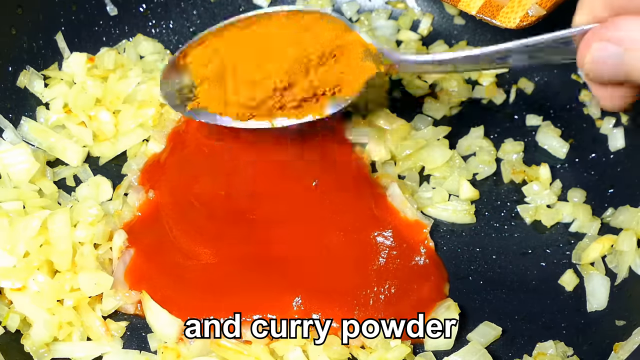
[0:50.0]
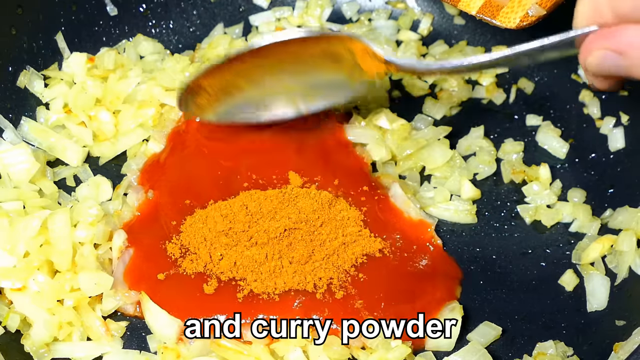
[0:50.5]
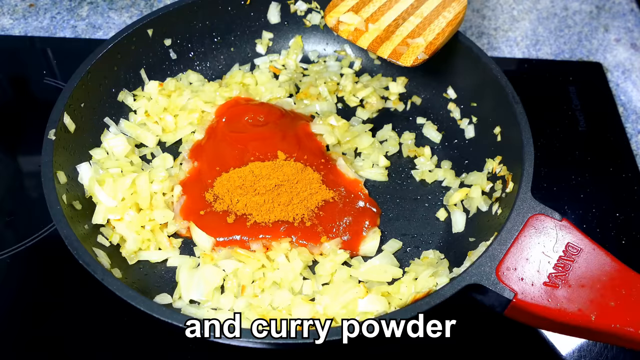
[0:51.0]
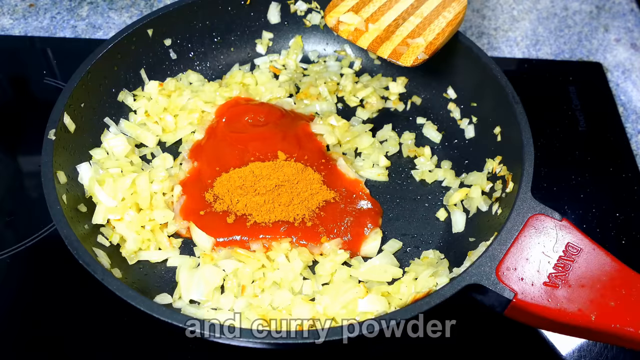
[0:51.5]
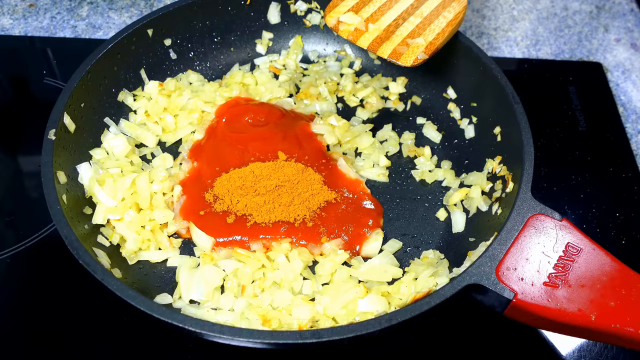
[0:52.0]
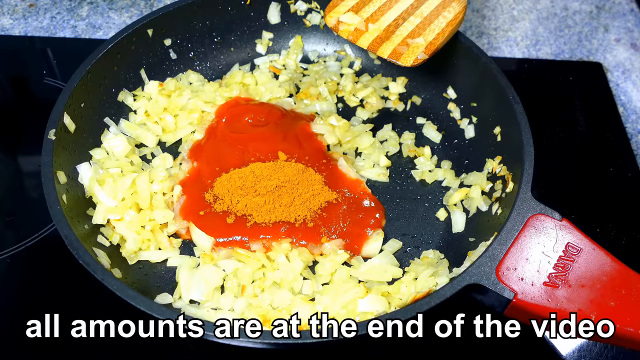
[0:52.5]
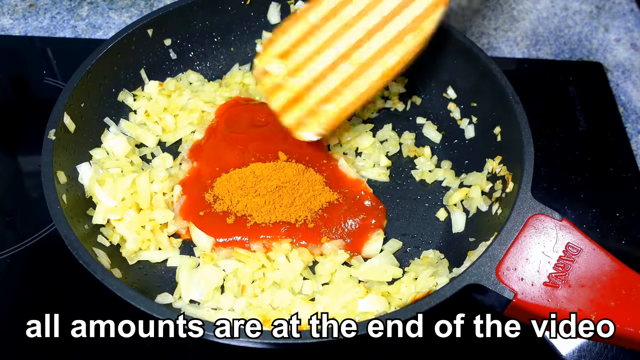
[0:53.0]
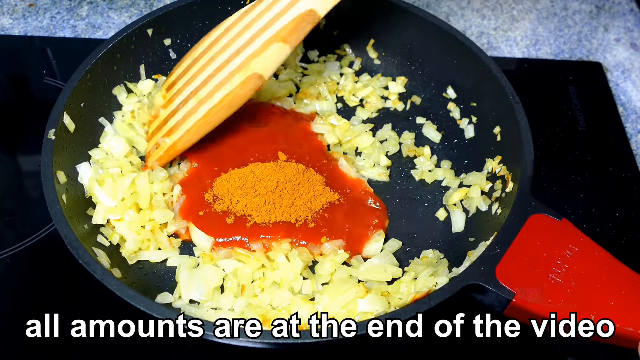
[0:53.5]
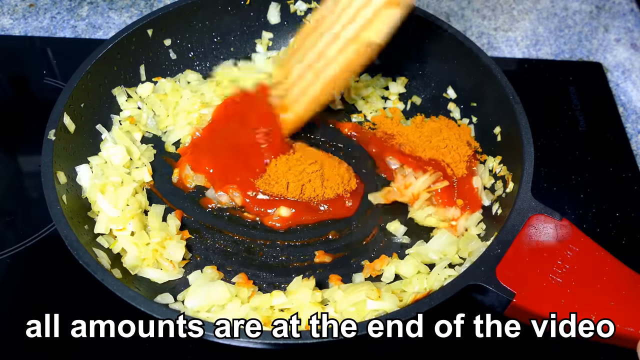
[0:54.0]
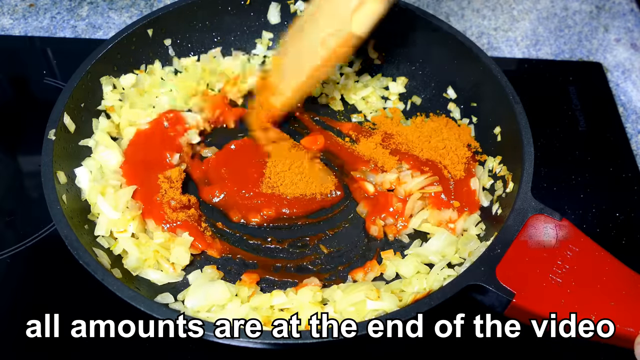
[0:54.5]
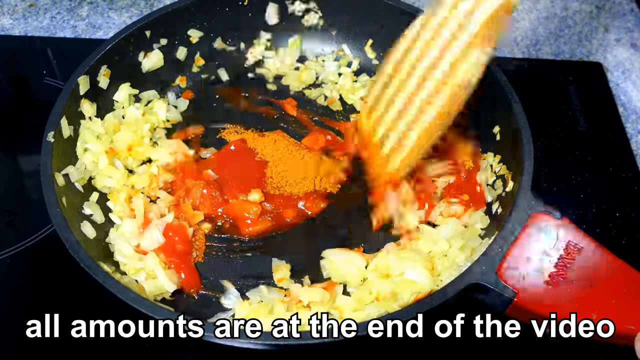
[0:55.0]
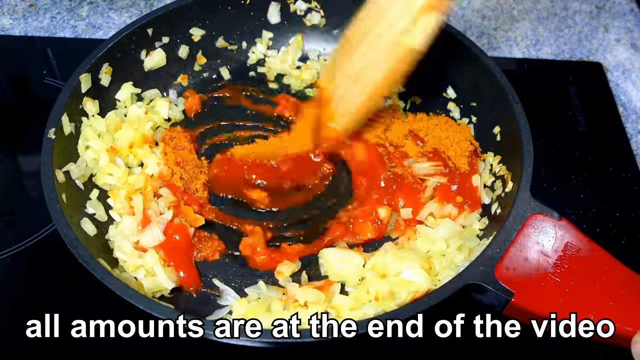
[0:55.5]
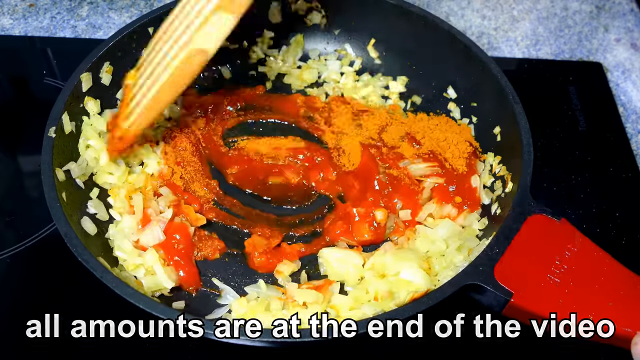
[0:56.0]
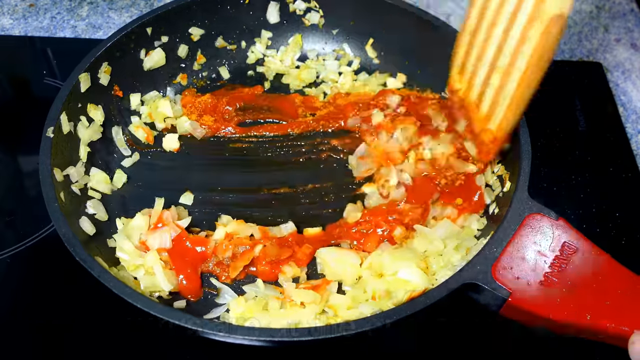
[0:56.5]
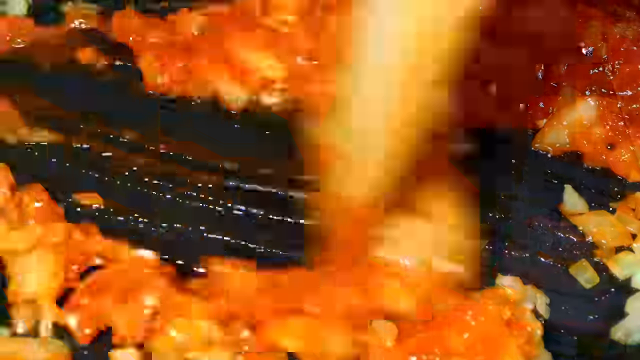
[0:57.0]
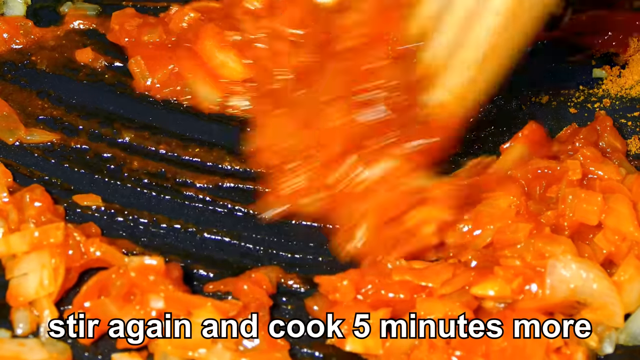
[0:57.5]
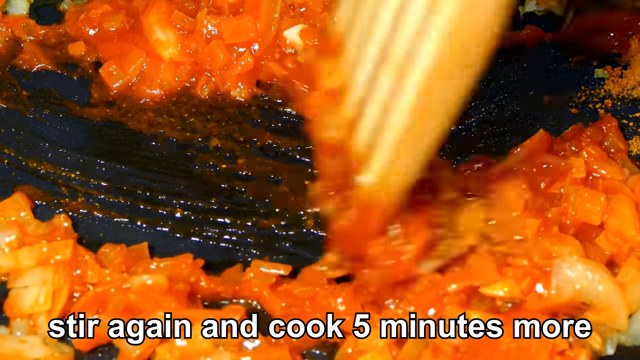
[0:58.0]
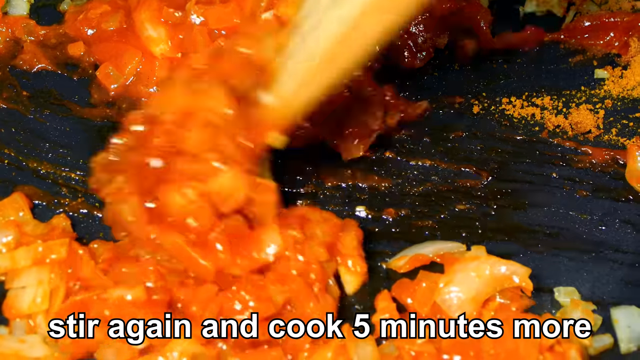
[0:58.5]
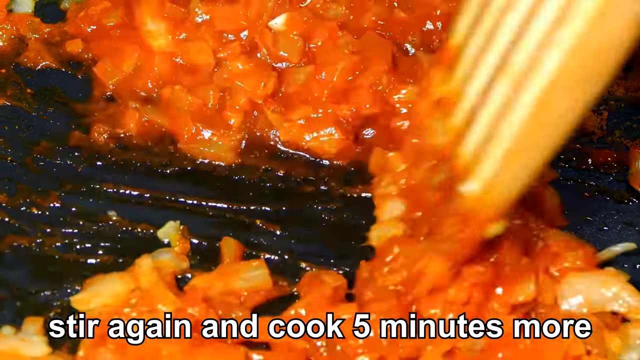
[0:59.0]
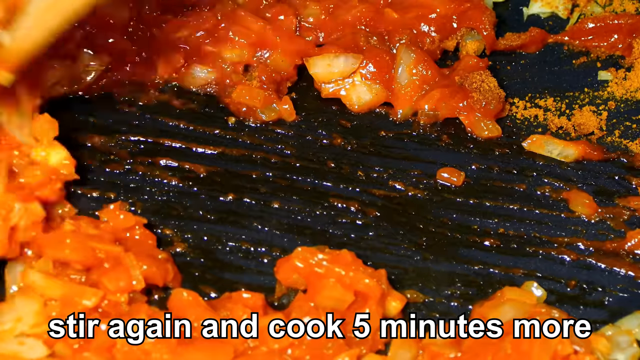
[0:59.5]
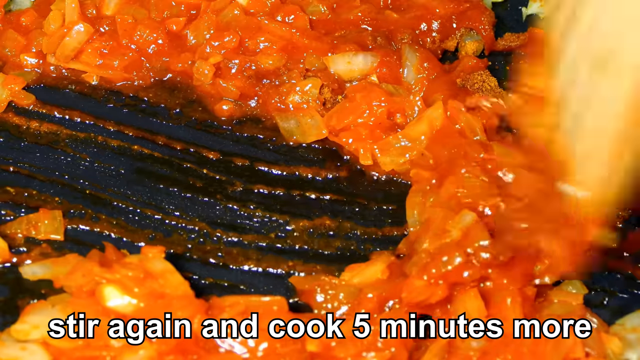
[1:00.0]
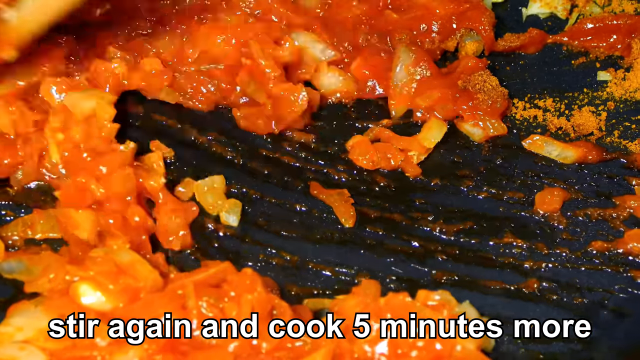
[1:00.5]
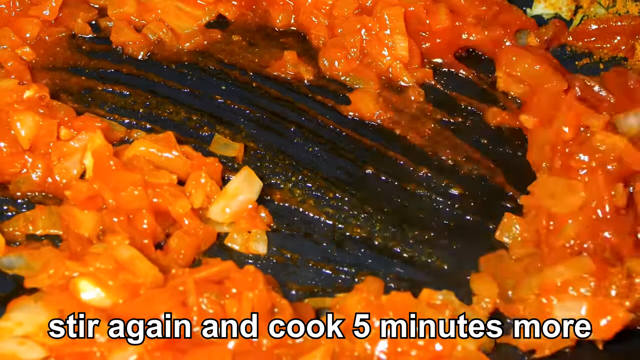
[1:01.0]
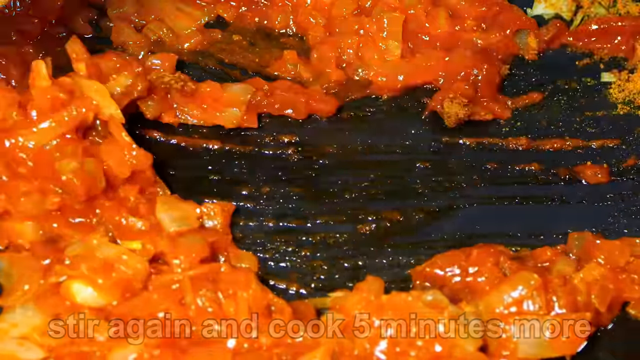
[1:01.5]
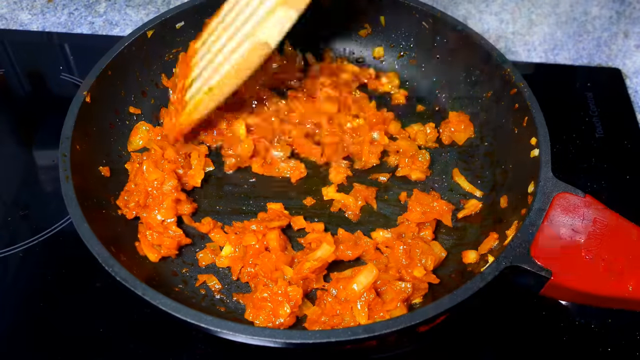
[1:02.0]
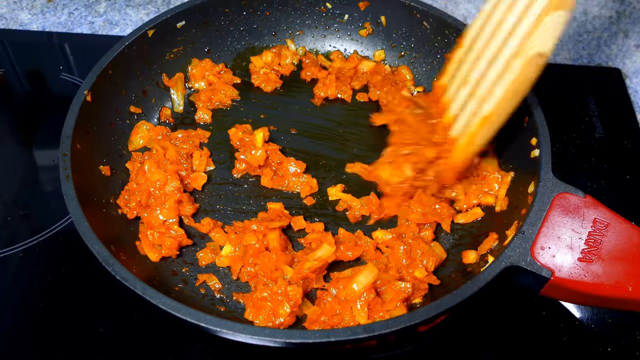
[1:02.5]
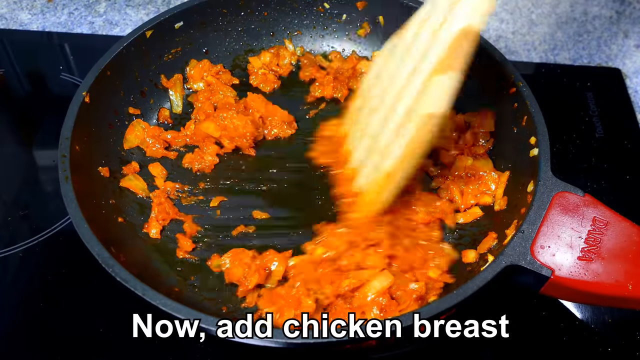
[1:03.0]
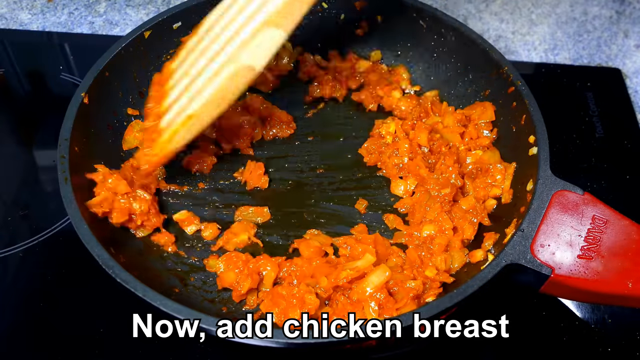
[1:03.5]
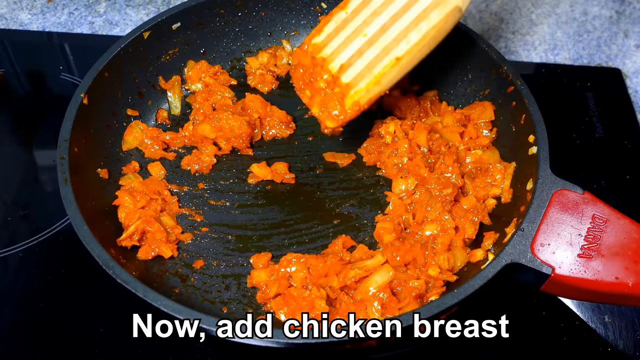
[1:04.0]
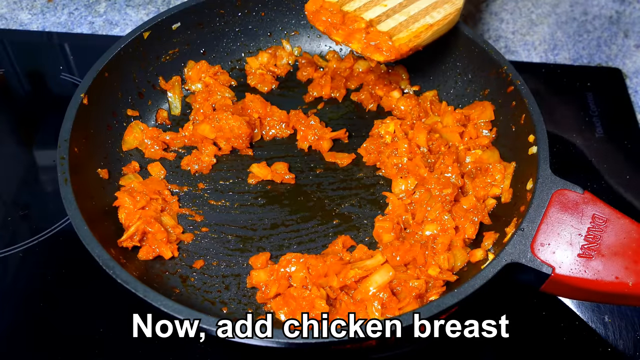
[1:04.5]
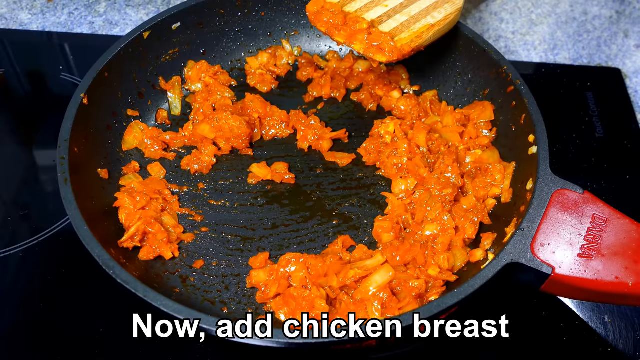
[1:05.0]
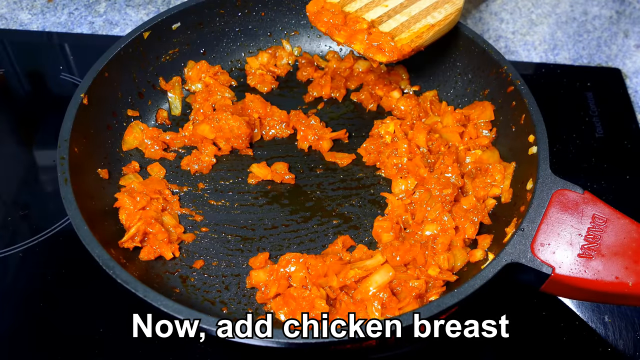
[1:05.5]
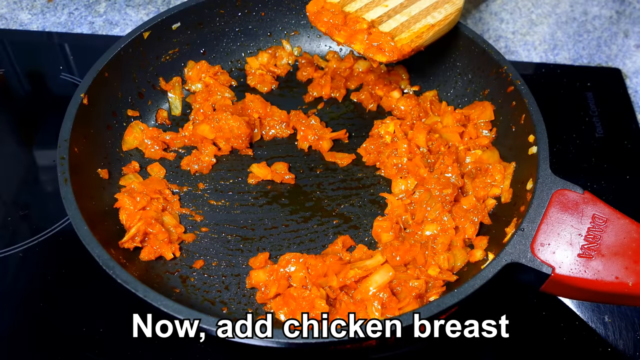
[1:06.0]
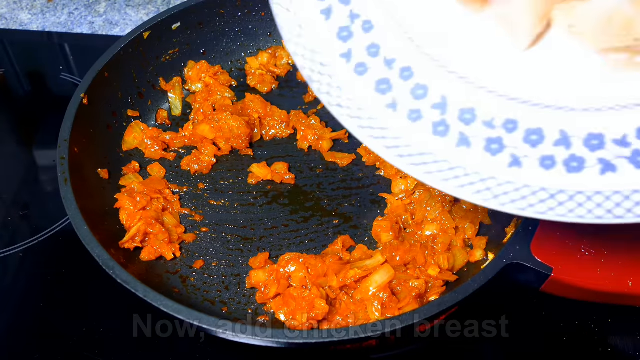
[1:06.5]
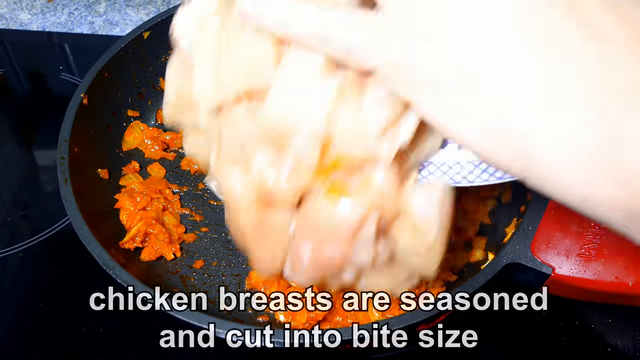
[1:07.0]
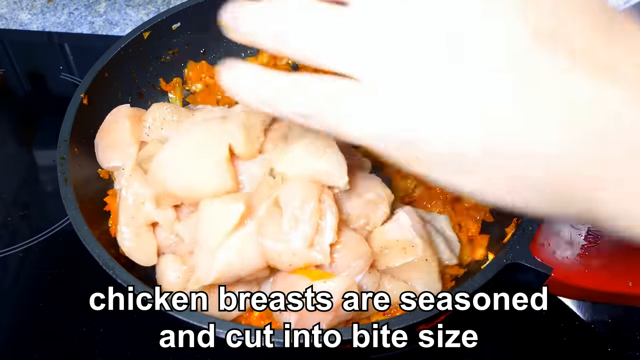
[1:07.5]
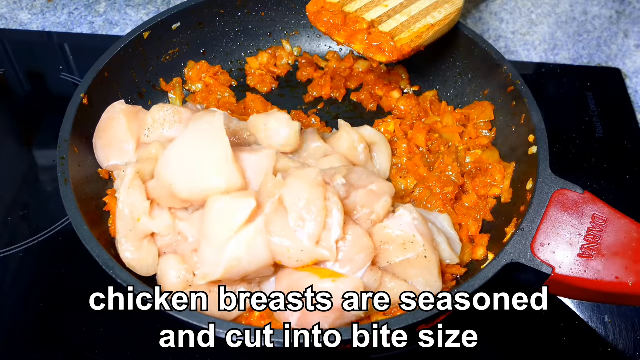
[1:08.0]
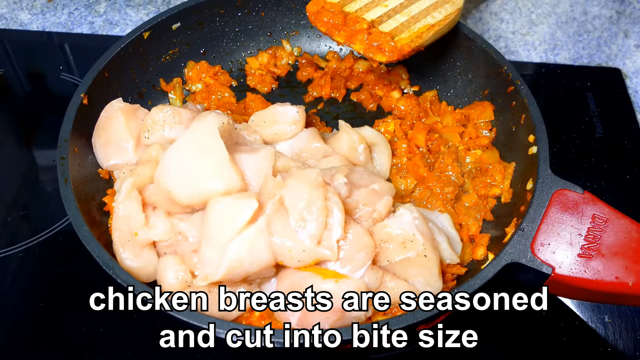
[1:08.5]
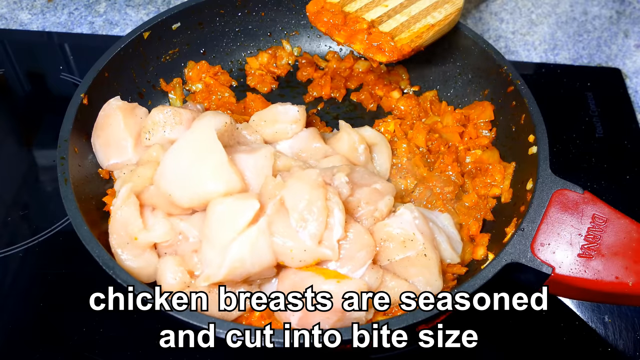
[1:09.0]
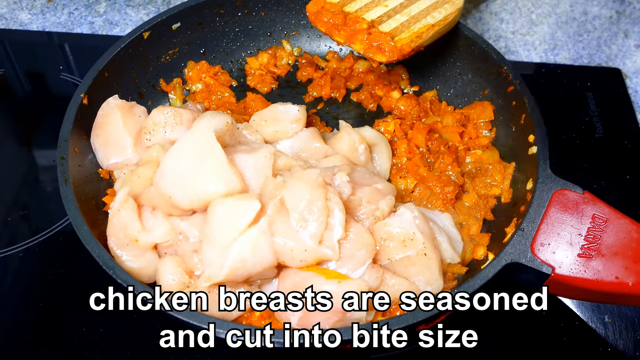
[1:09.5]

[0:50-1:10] With the curry powder in the pan, text says "all amounts are at the end of the video." The ingredients are stirred and cooked for five minutes more. Text then says "now add the chicken breast," and a large helping of chicken breast, apparently two large or two medium-sized chicken breasts chopped into cubes, is put into the center of the pan with the other ingredients and mixed in.